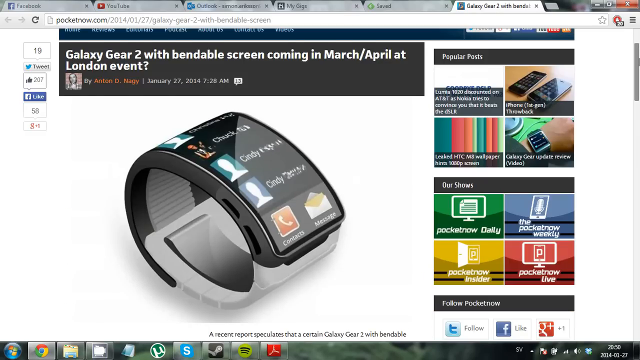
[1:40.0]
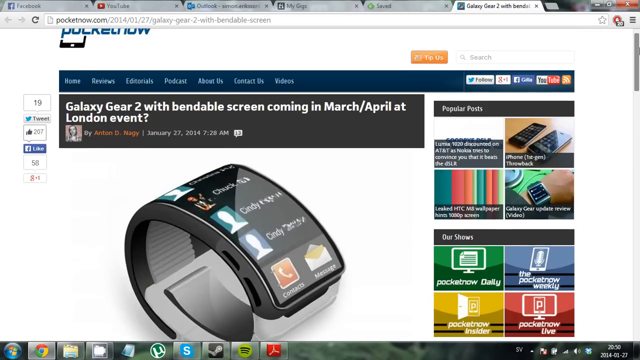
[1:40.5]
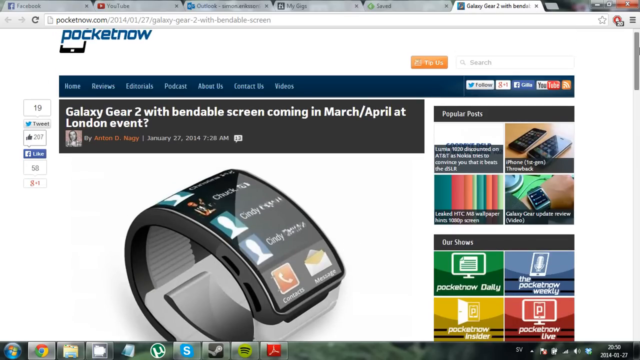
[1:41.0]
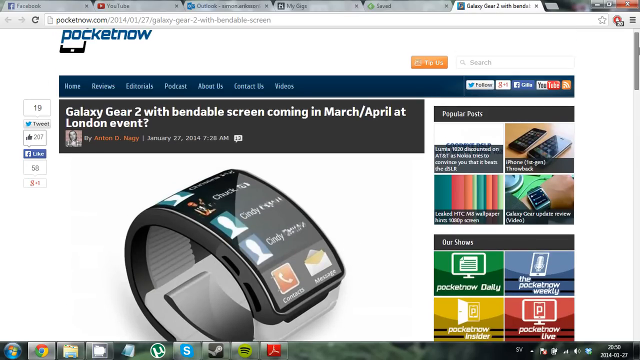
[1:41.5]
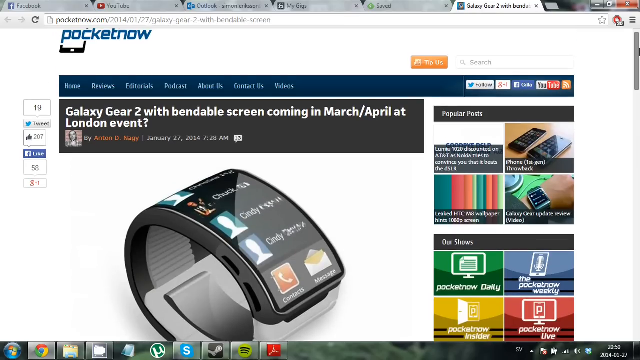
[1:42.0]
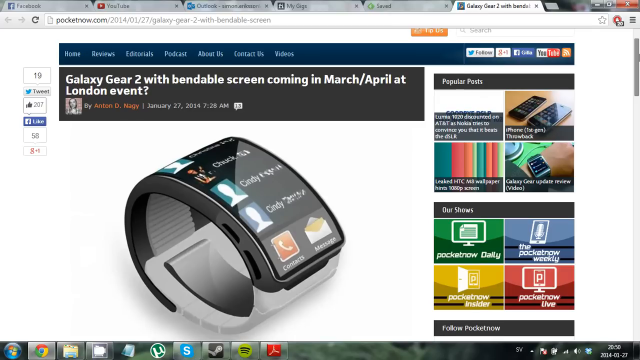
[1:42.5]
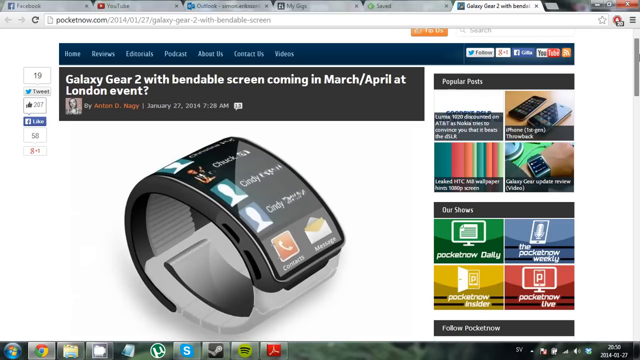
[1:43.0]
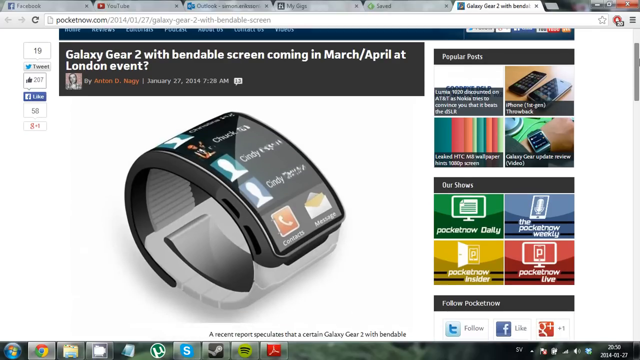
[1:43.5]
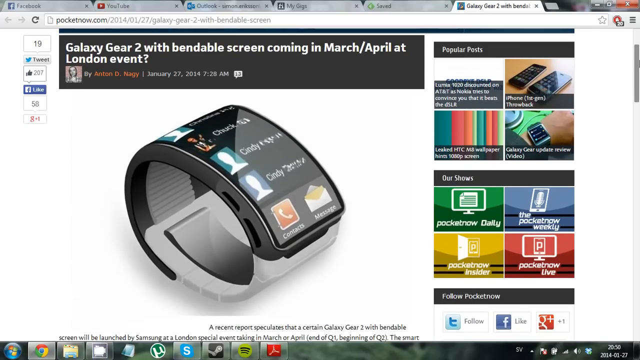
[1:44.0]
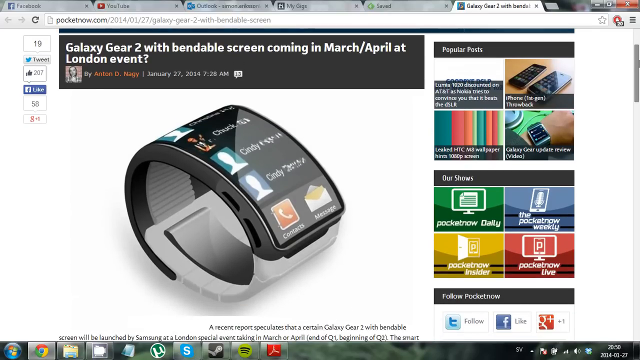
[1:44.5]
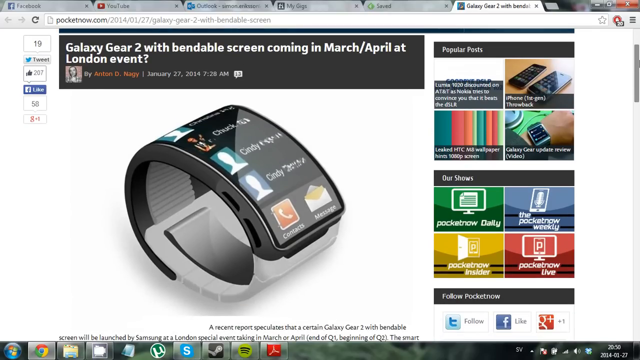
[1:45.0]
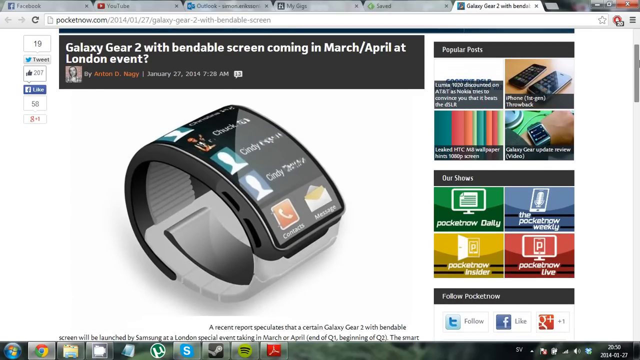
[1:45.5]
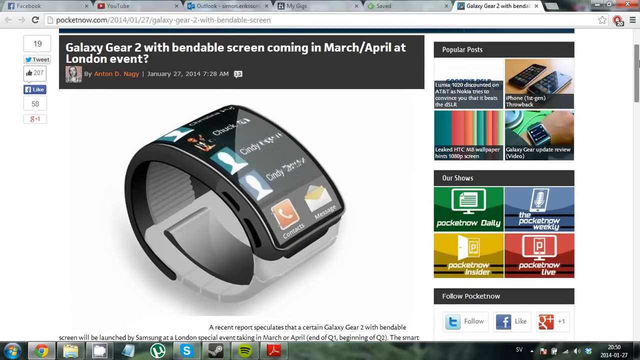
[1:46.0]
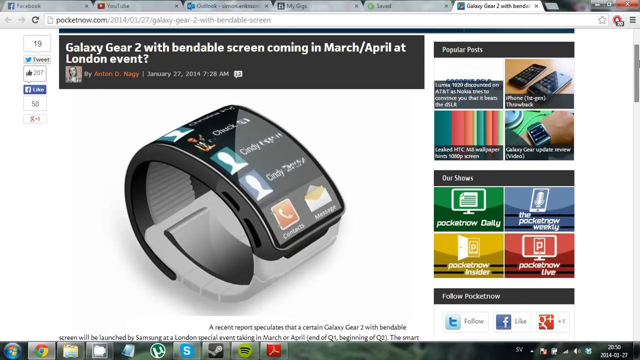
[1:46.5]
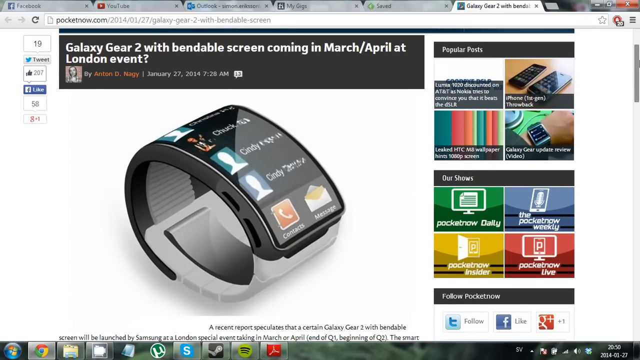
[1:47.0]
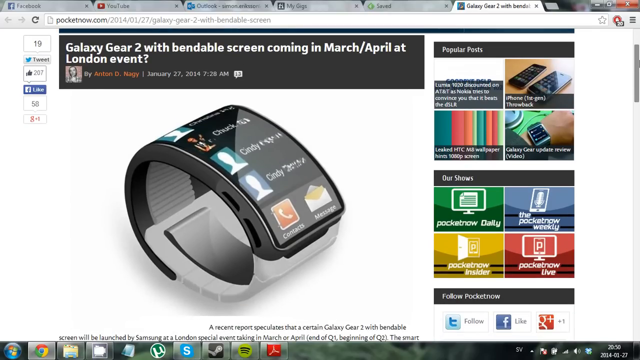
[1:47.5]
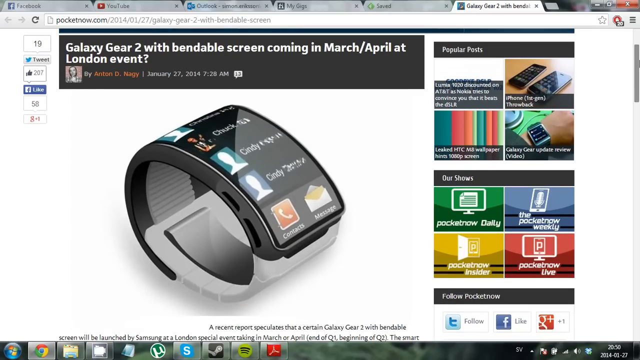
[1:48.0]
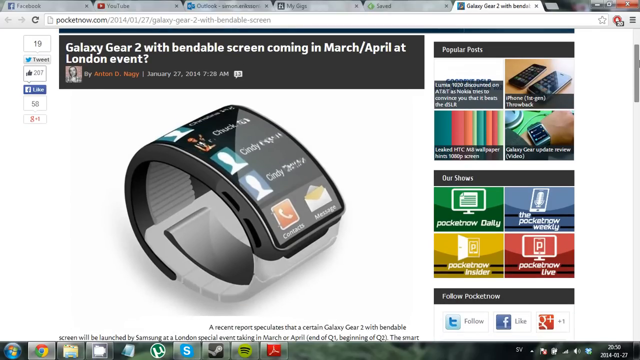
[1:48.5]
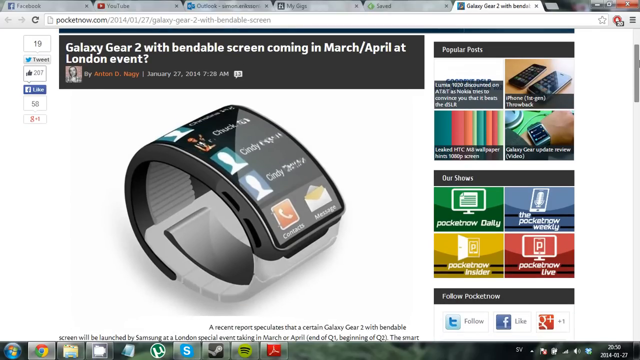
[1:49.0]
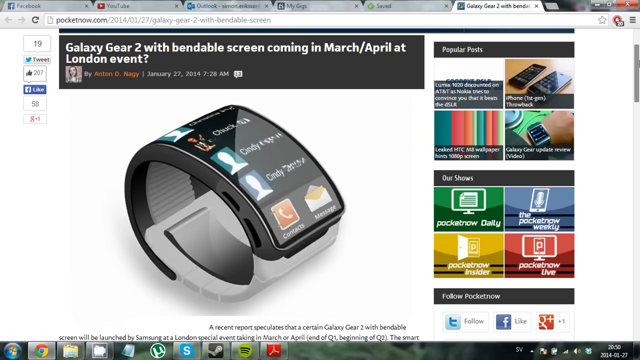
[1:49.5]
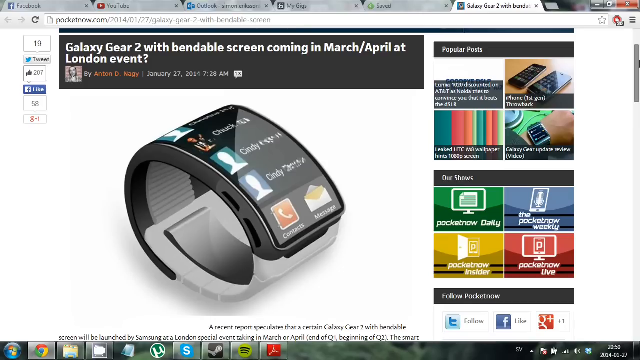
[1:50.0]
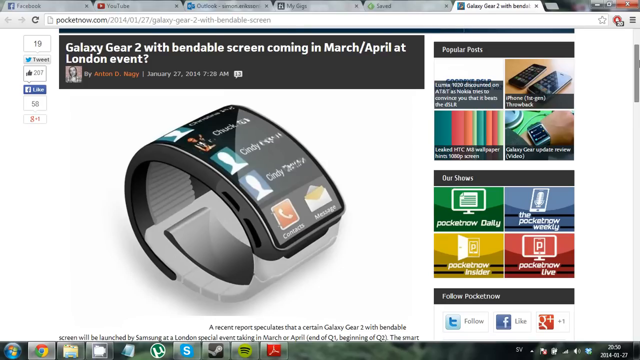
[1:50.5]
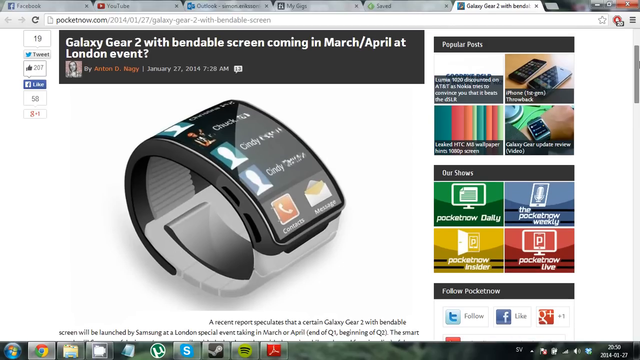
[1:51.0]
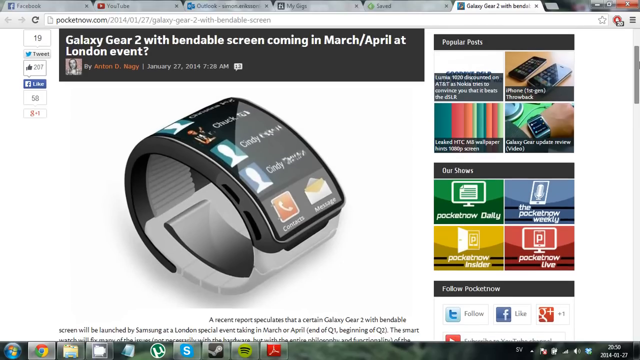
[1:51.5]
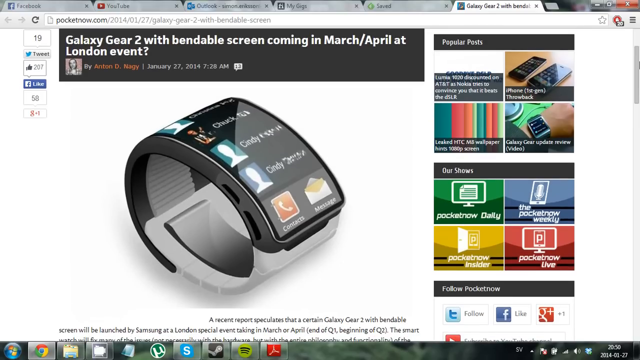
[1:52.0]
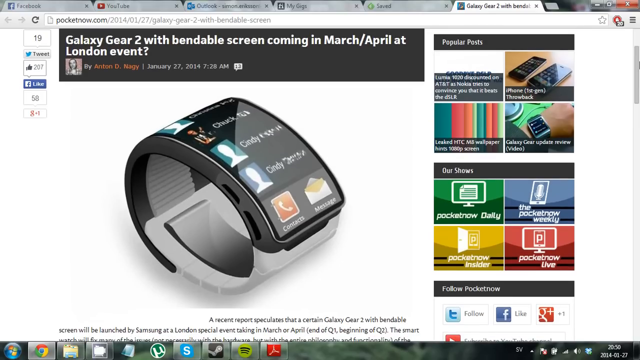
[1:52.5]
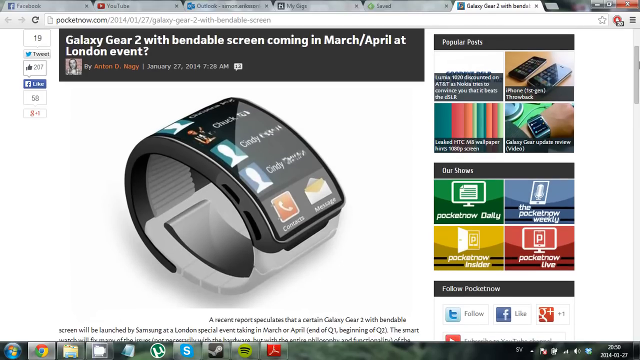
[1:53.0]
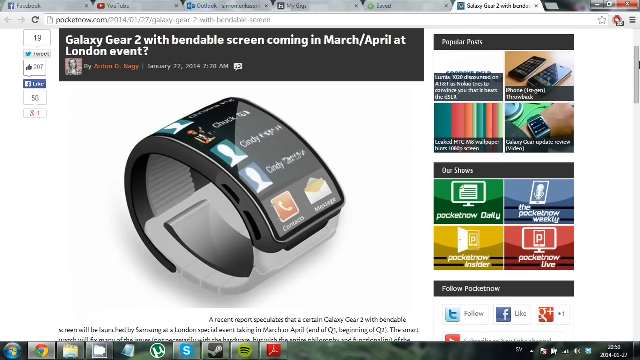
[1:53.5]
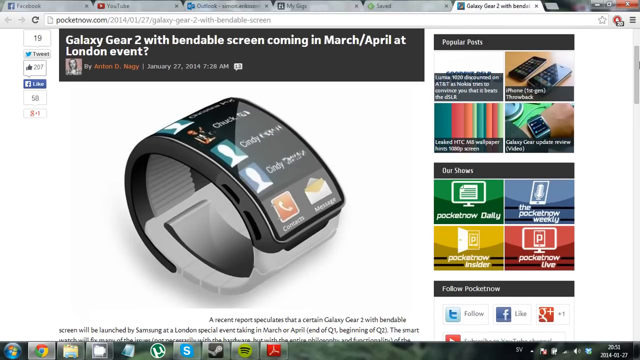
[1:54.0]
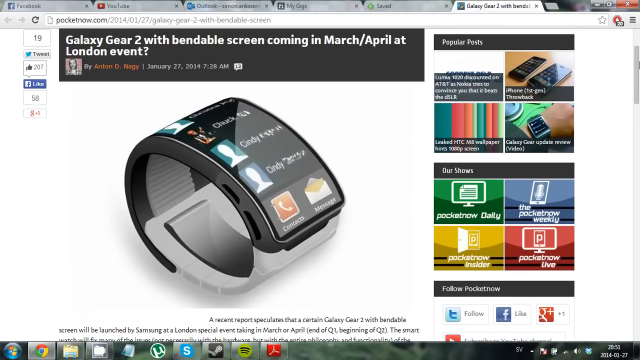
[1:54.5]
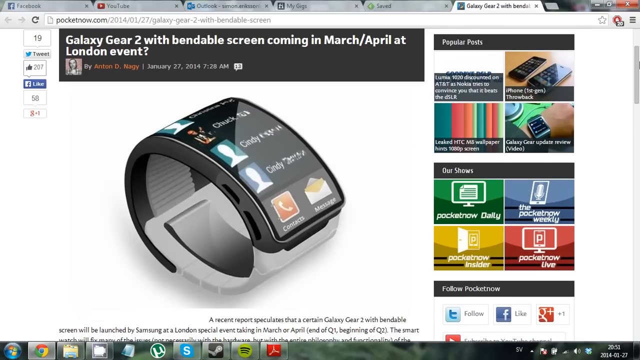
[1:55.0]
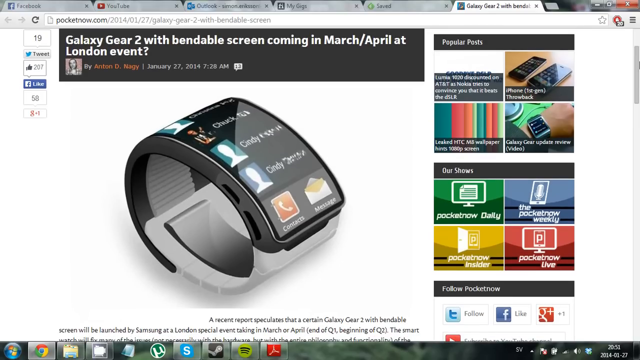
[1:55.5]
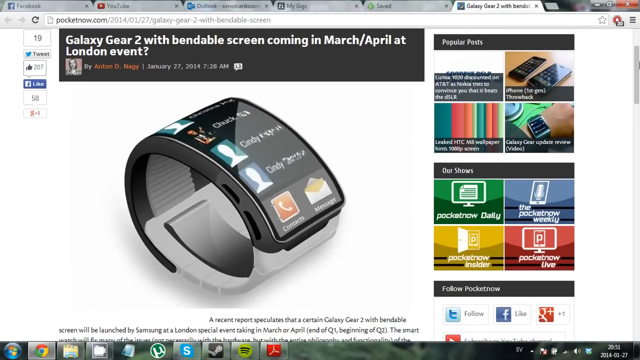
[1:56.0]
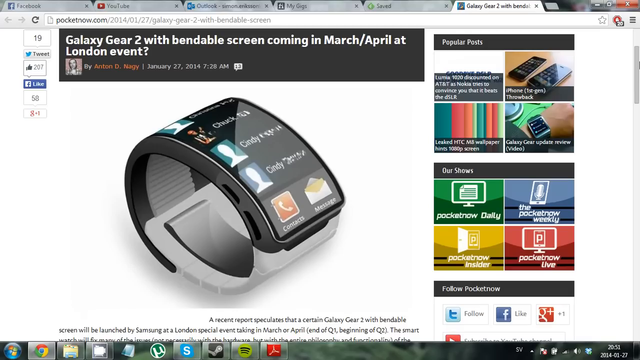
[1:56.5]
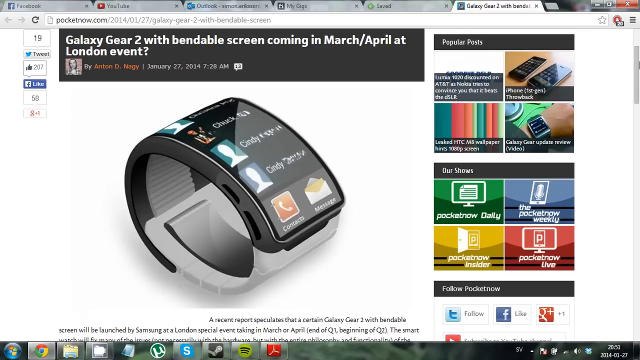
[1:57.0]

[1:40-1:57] Many things are shown together: the smartwatch, a phone and other items.